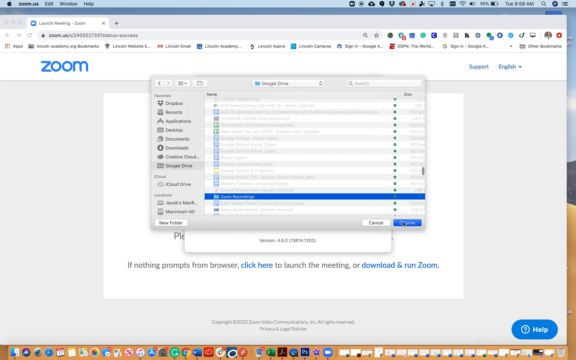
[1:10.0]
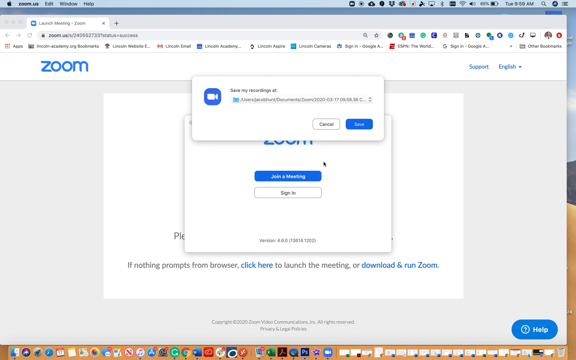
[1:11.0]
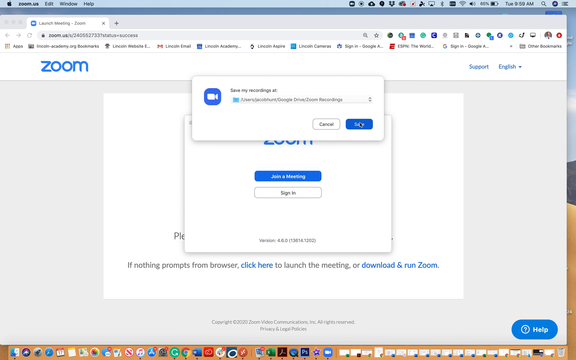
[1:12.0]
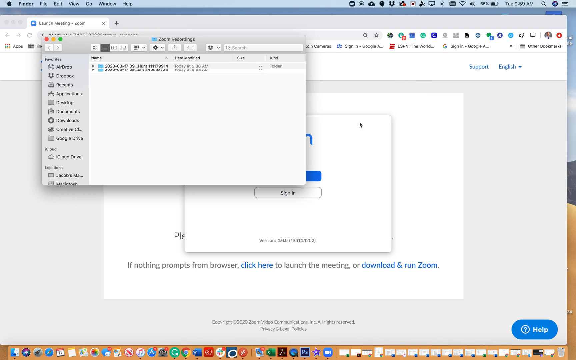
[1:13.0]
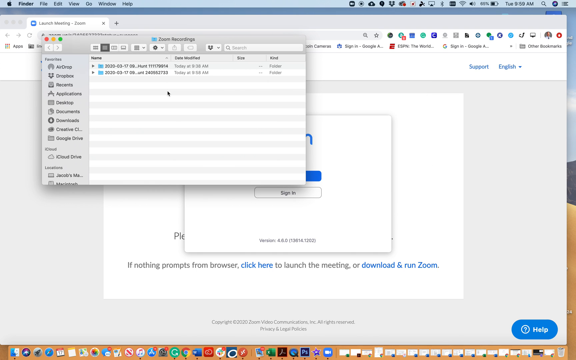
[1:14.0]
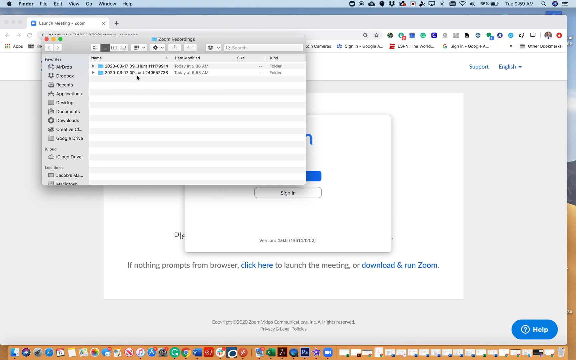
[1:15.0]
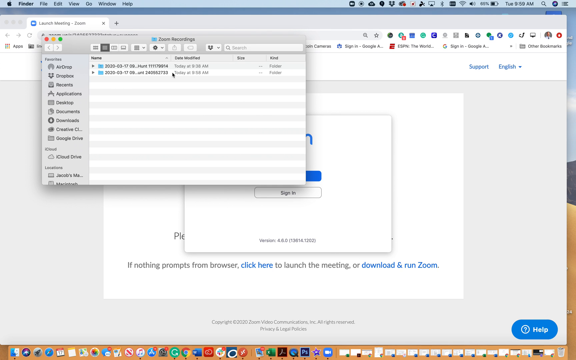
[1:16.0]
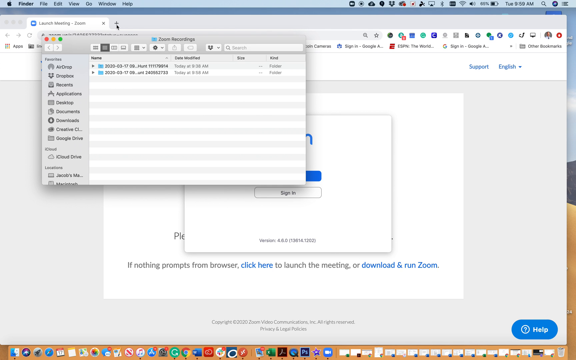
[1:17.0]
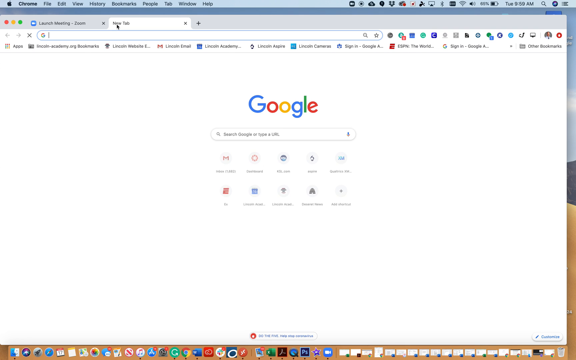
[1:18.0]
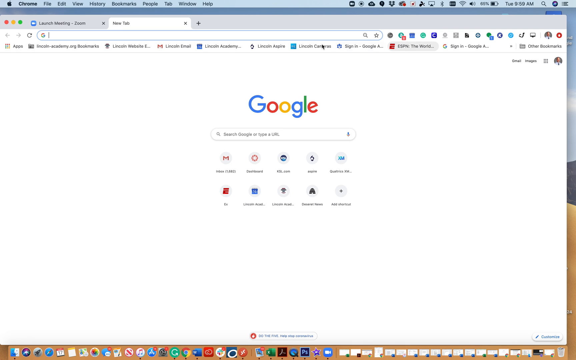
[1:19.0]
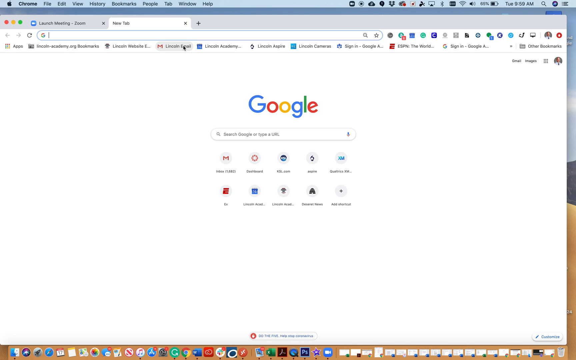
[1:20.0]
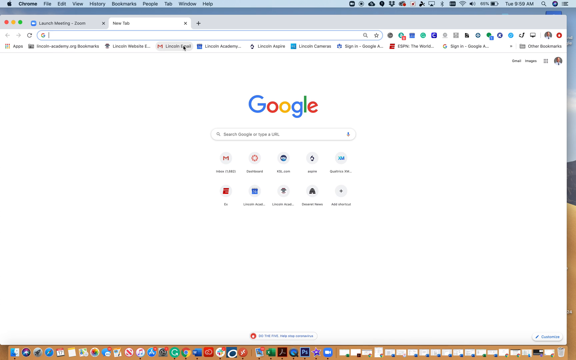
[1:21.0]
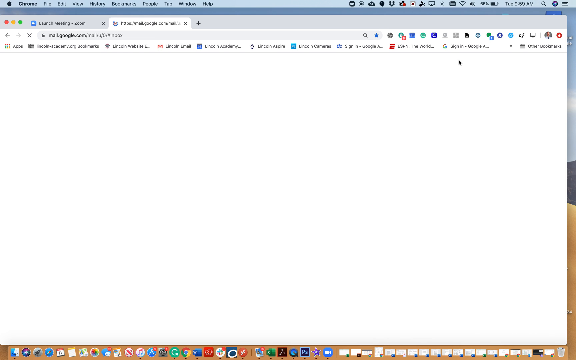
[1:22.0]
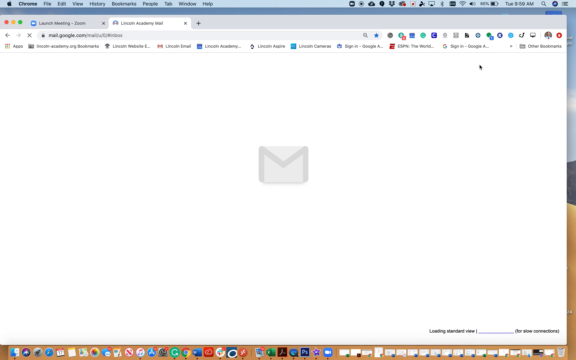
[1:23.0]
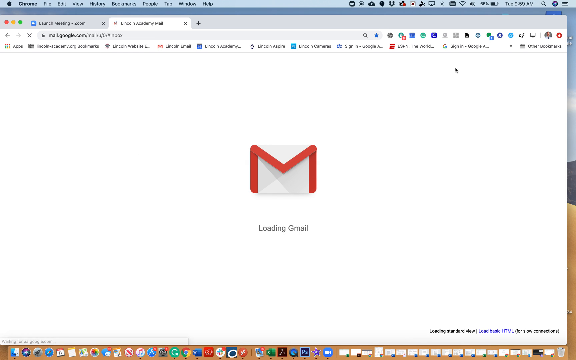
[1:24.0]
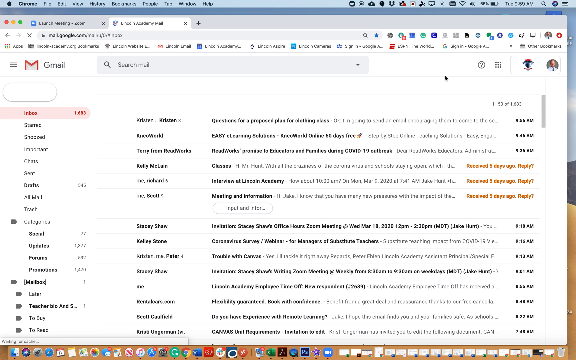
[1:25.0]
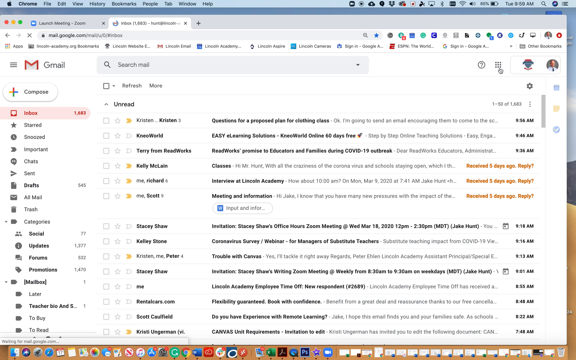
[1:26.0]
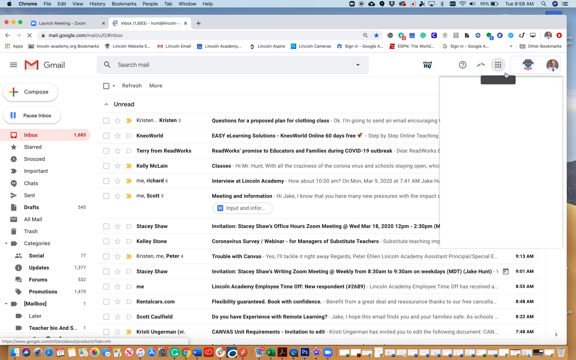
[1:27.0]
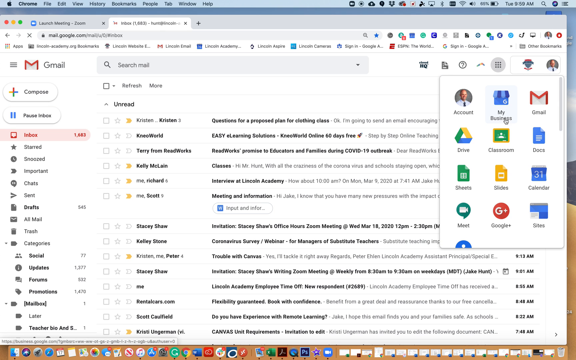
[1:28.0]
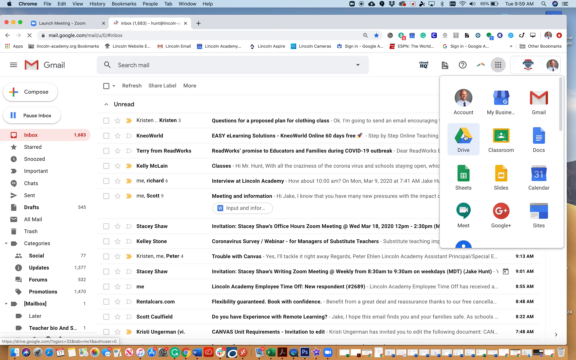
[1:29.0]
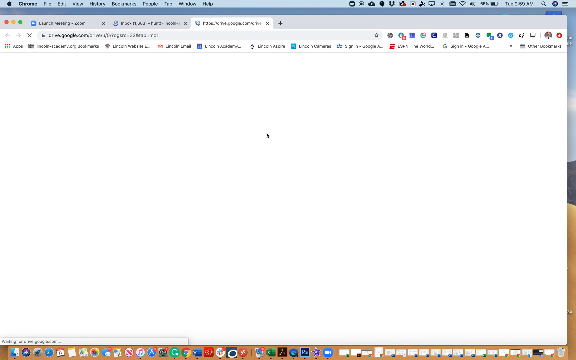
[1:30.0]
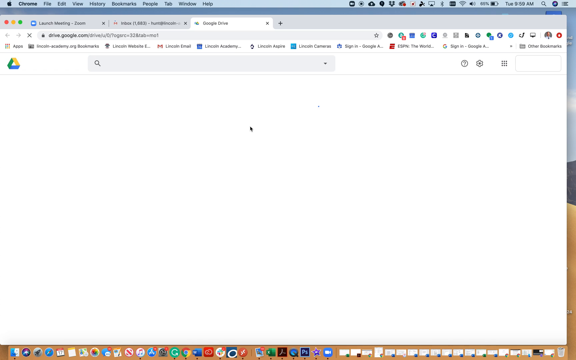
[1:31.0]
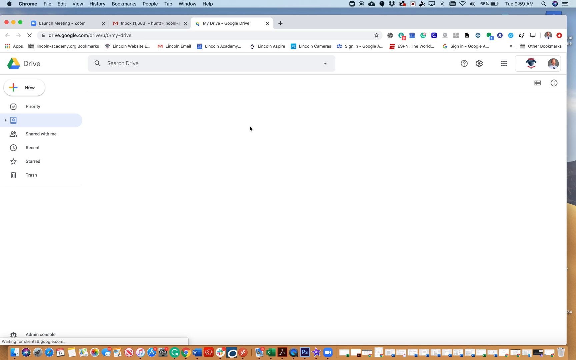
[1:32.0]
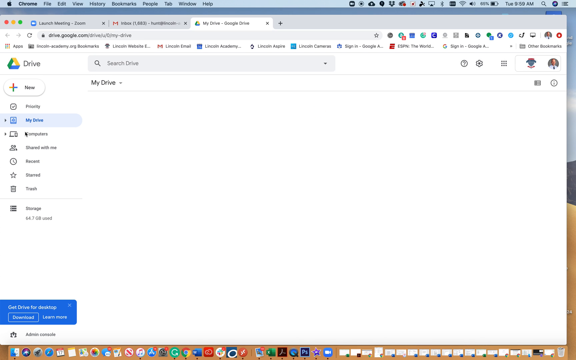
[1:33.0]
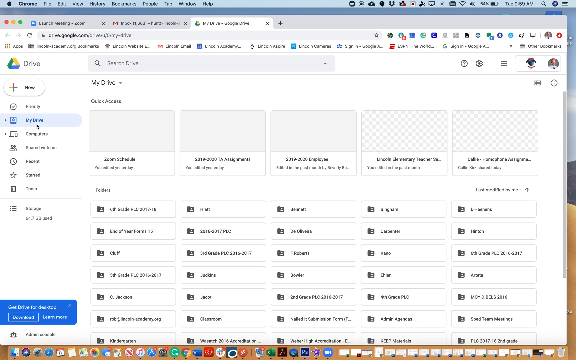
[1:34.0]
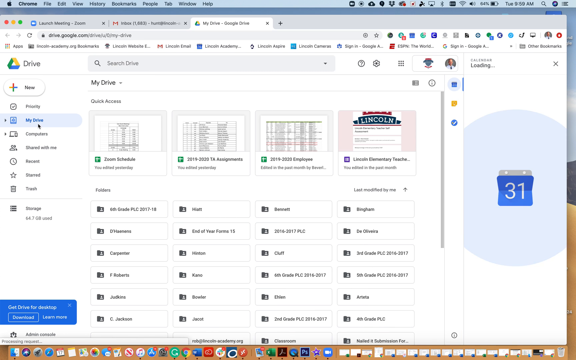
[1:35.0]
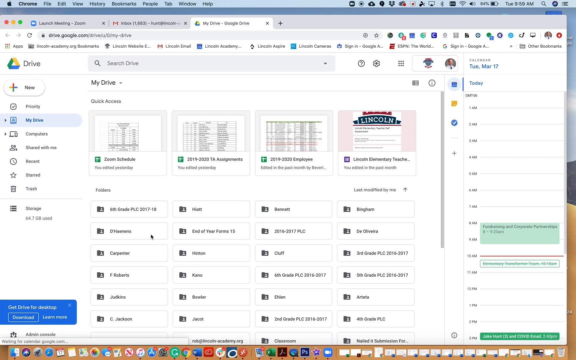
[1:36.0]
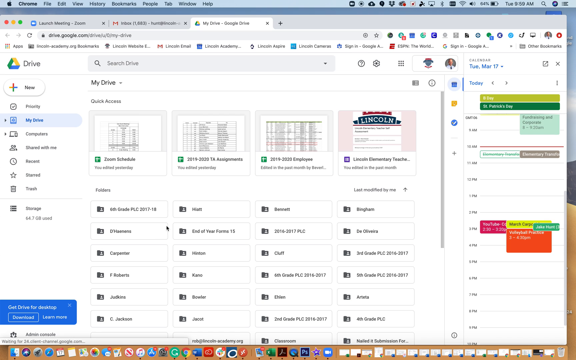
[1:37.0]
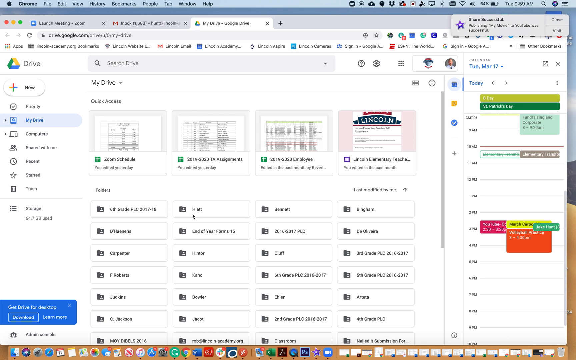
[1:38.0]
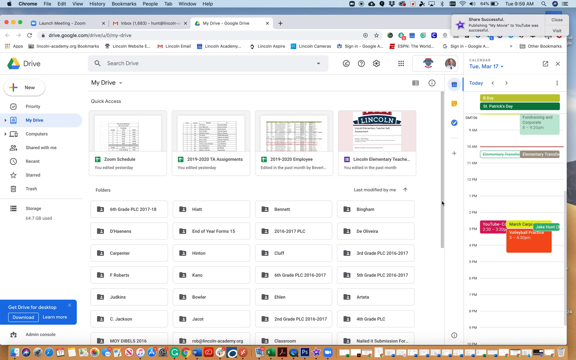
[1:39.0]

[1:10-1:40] A white rectangular dialog box shows the blue Zoom logo with a white camera inside on the left side and "save my recording" to the right. Underneath is an unidentifiable file folder name with an up and down arrow. Below, to the right, is a white box with black letters that says "cancel," and to the right of that a blue box with white letters that says "save." The user clicks save. The video transitions to the Zoom website, showing a white square with two dots at its top left, "Zoom" in blue in the center, a blue button with white letters reading "join a meeting" underneath, a white button with black letters reading "sign in" below that, and an unidentifiable version number at the bottom of the white box. The user selects a particular Zoom recording; it is unclear how the user gets to that location. The user opens a new browser tab, reaching google.com, and selects a bookmark for accessing Gmail. A red M envelope, the Gmail logo, appears with the text "Loading Gmail." After a transition, the user's Gmail account appears, showing approximately over 1,000 unread emails. The user selects a button of many dots at the top right of the screen, and a box with many Google services appears; the user selects the Google Drive logo. The user is transferred to Google Drive and selects My Drive.